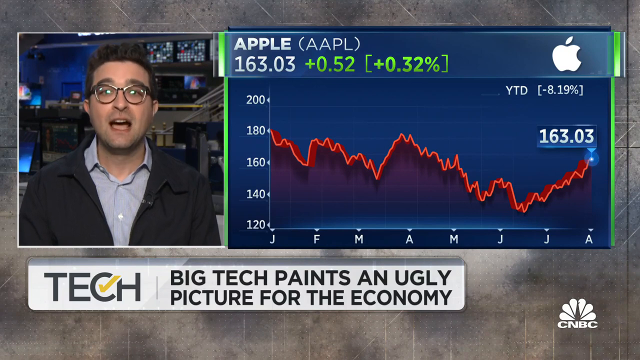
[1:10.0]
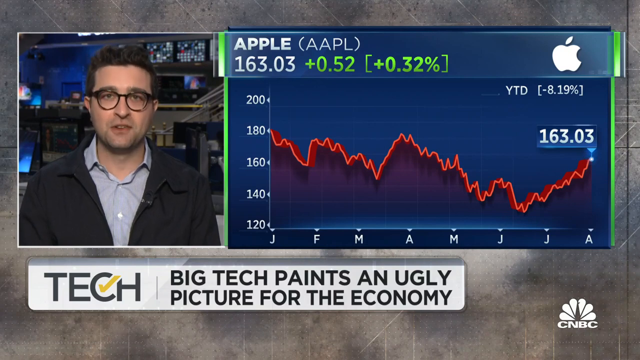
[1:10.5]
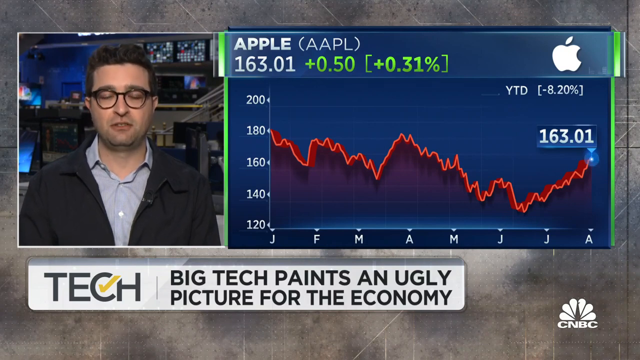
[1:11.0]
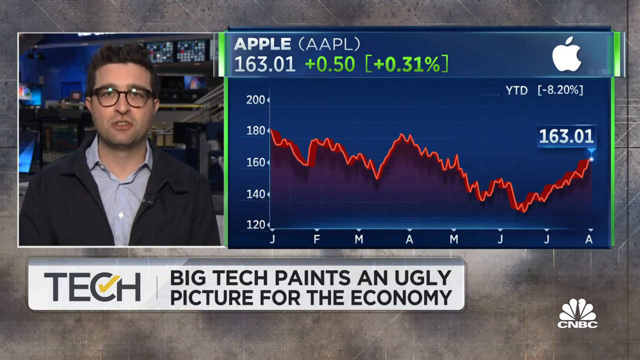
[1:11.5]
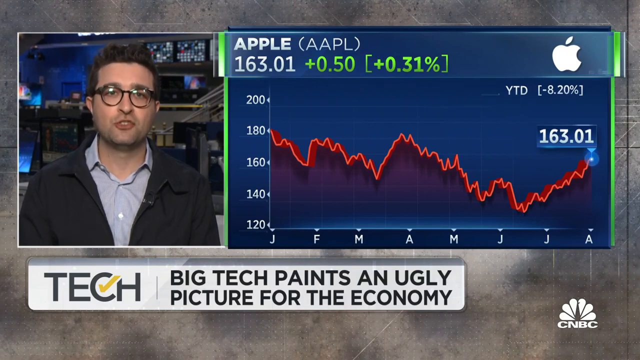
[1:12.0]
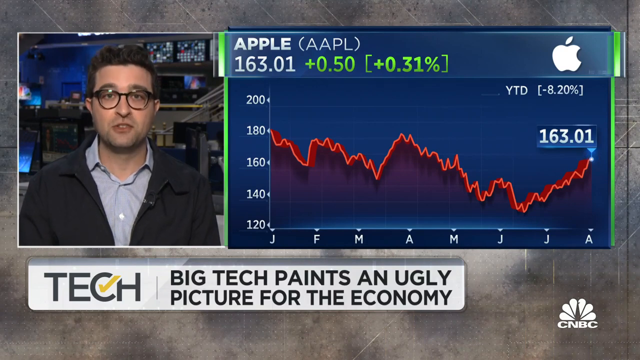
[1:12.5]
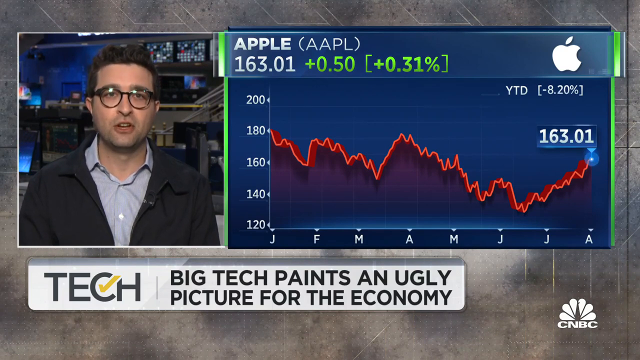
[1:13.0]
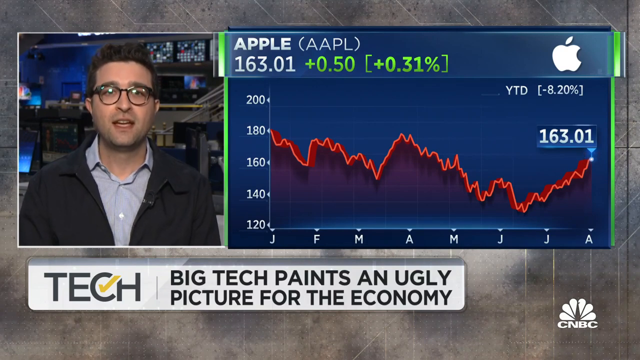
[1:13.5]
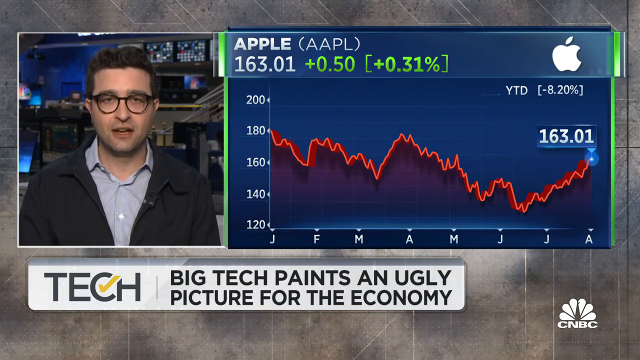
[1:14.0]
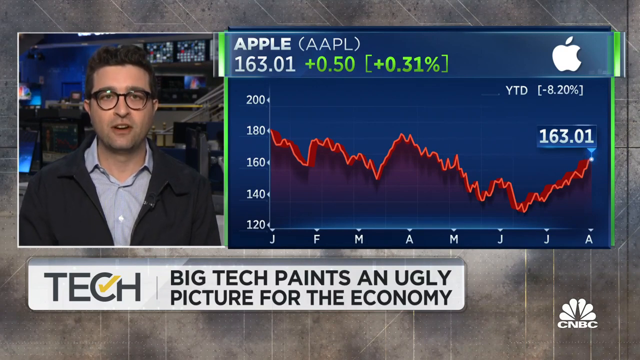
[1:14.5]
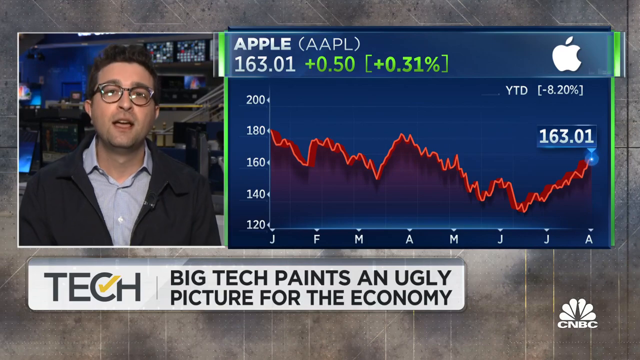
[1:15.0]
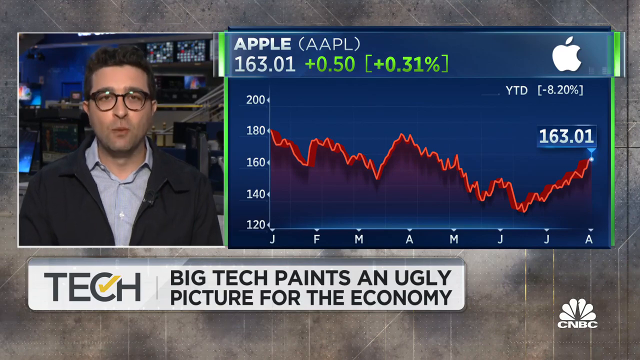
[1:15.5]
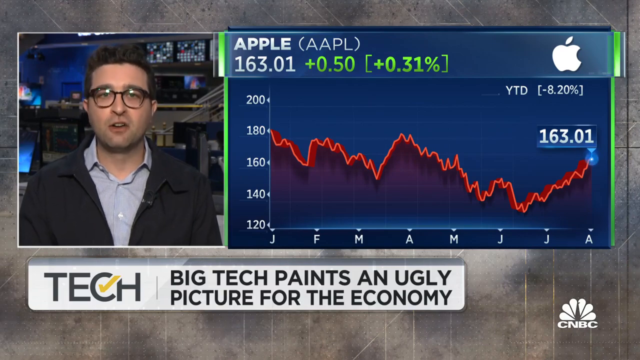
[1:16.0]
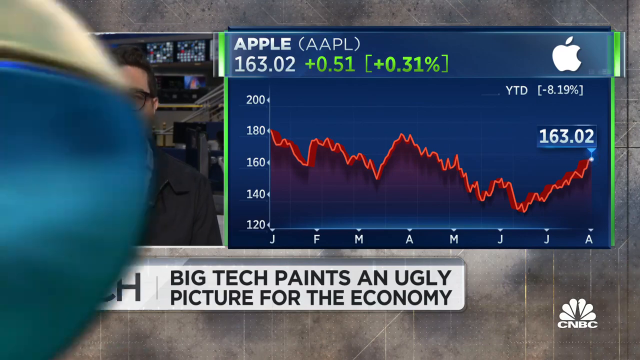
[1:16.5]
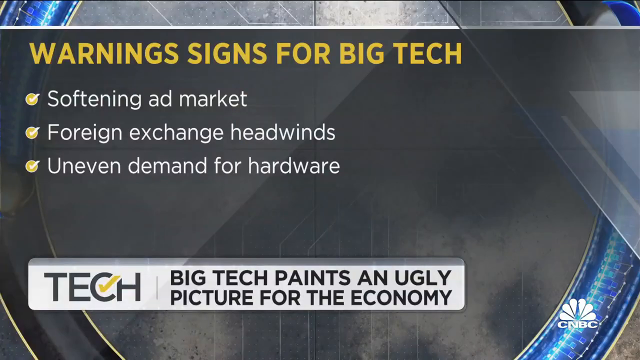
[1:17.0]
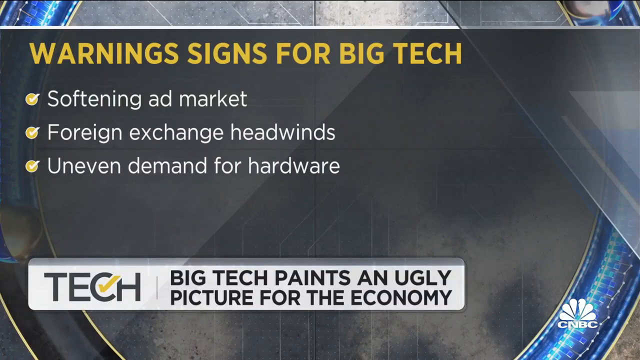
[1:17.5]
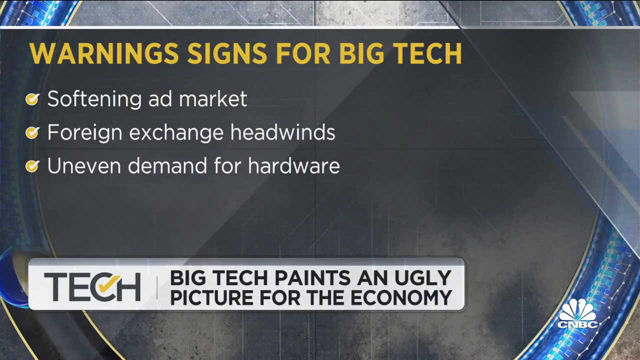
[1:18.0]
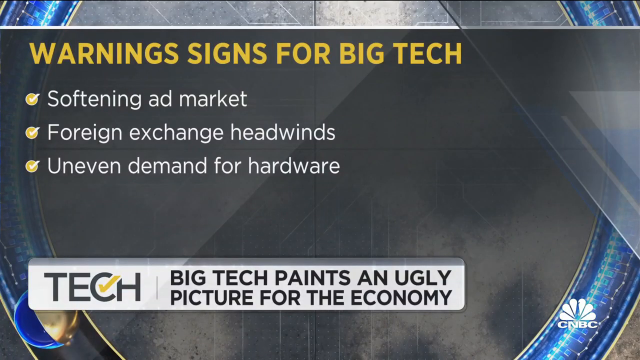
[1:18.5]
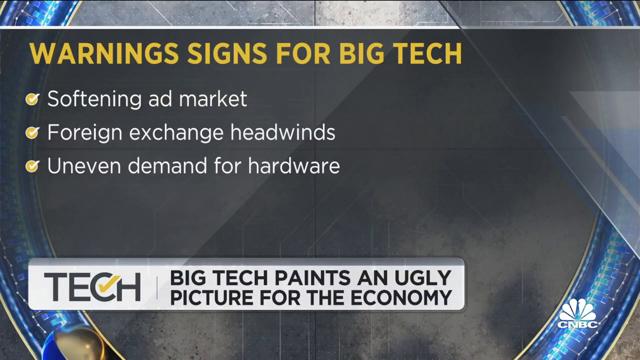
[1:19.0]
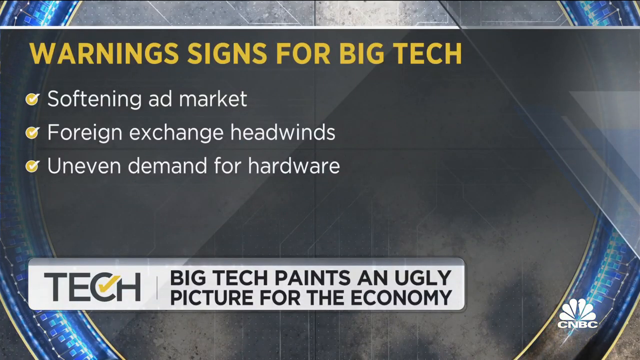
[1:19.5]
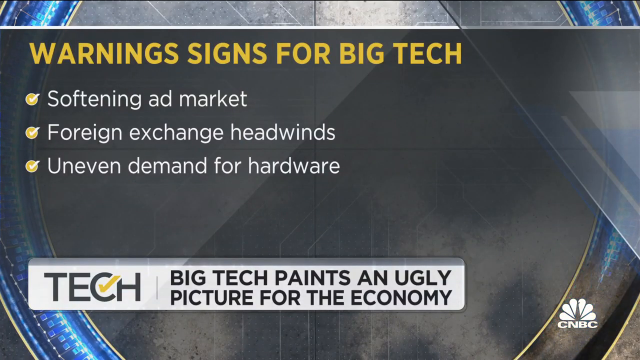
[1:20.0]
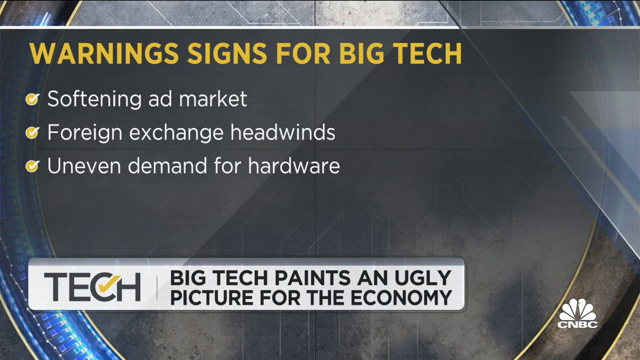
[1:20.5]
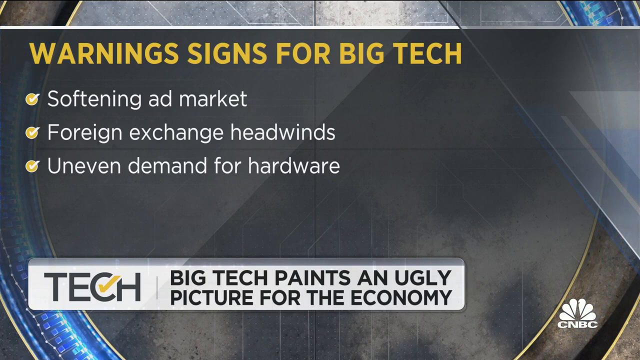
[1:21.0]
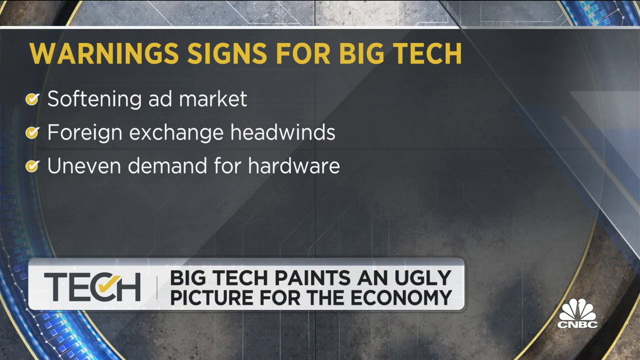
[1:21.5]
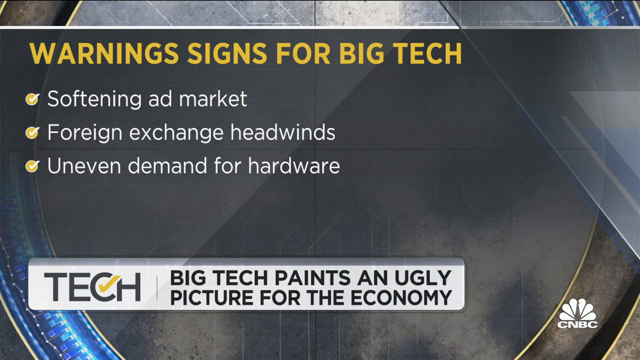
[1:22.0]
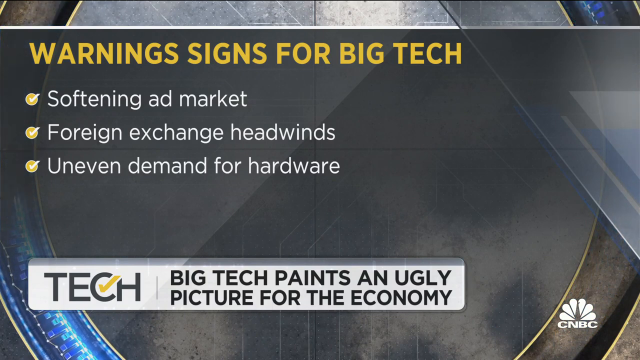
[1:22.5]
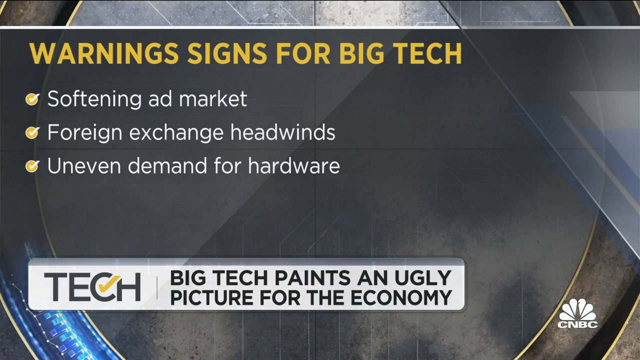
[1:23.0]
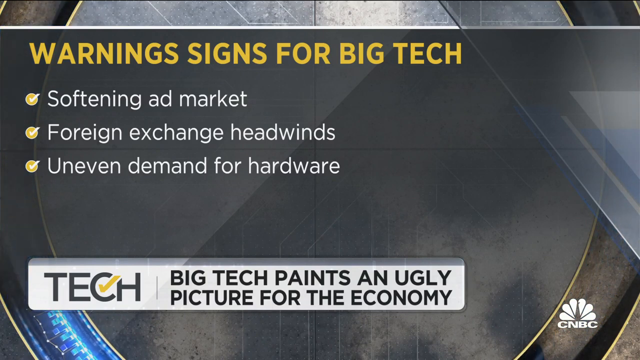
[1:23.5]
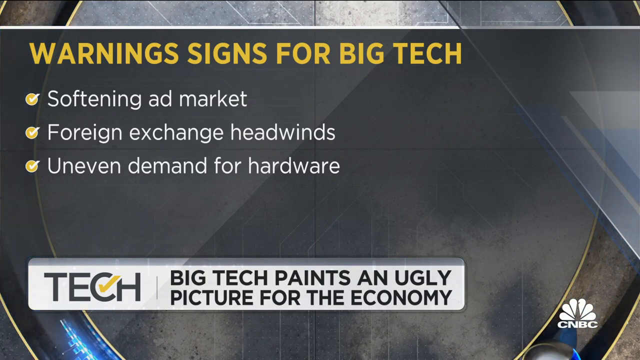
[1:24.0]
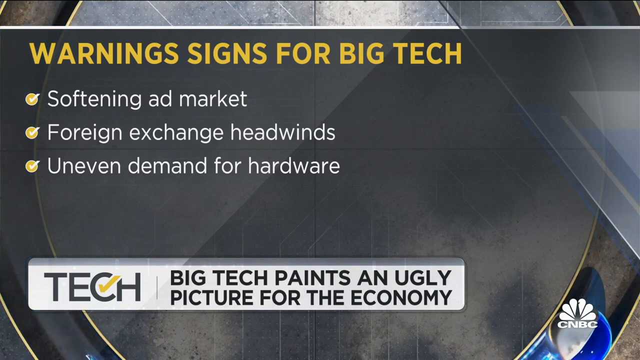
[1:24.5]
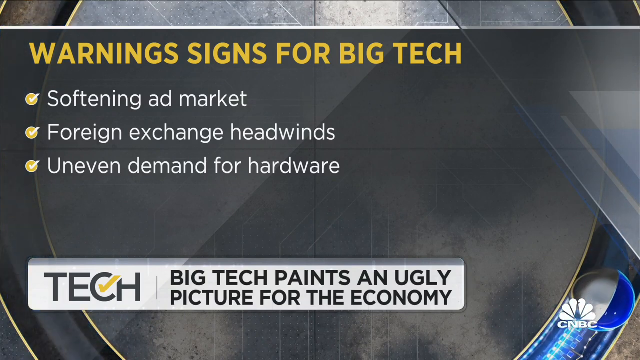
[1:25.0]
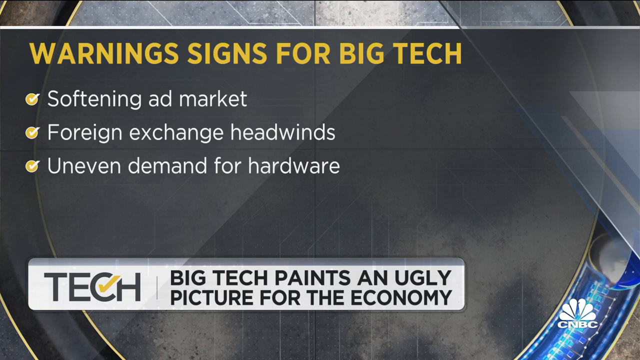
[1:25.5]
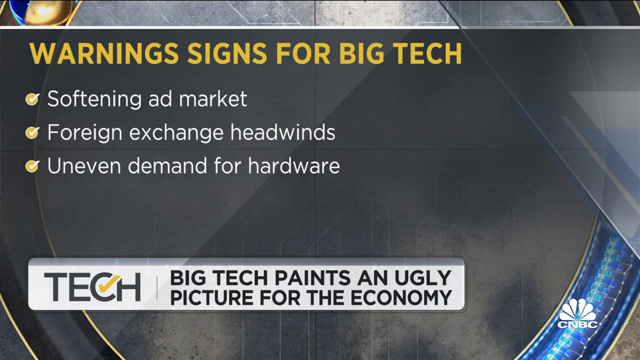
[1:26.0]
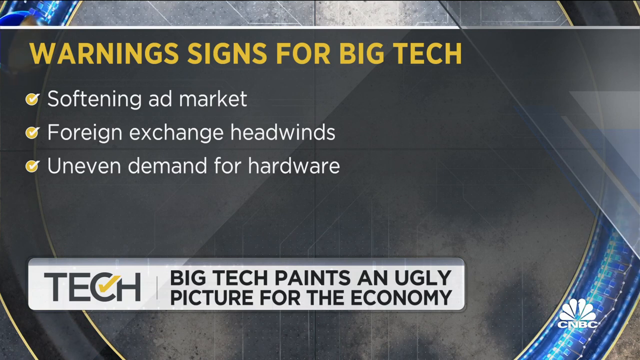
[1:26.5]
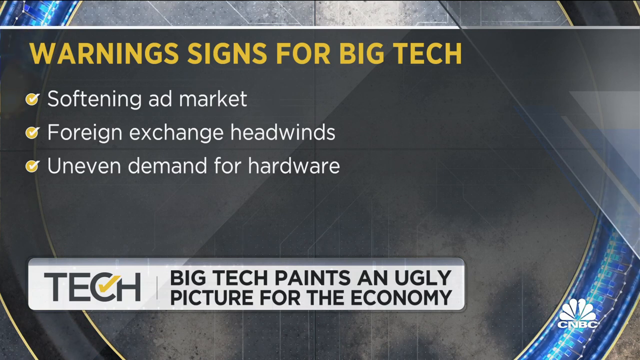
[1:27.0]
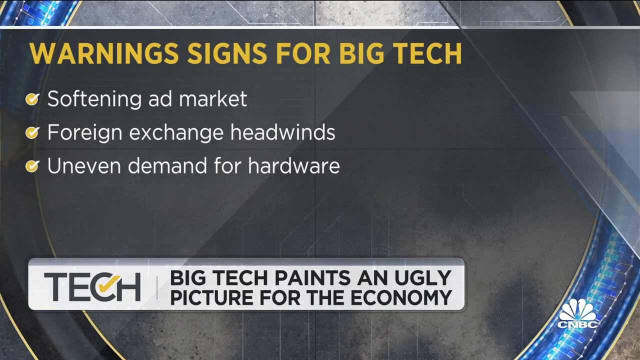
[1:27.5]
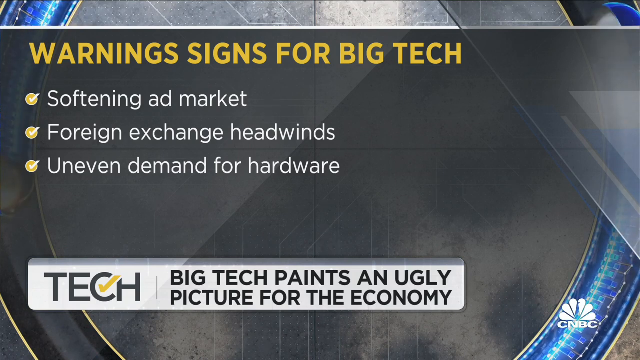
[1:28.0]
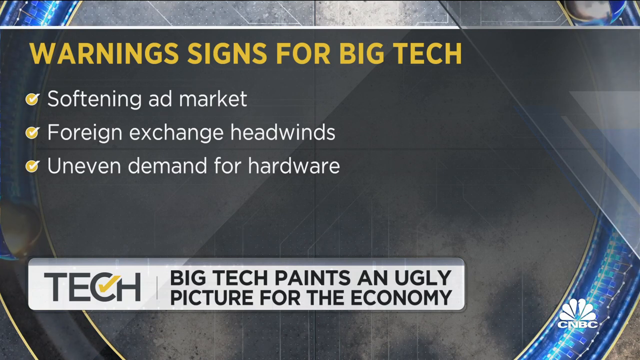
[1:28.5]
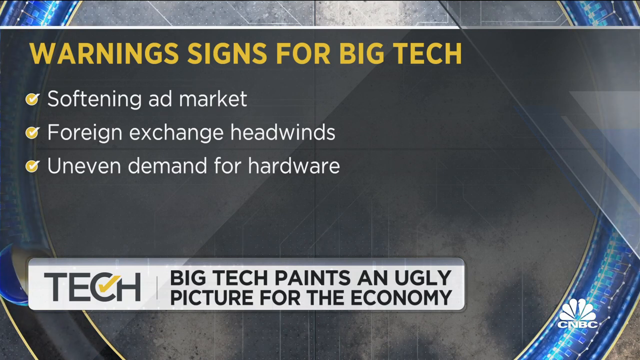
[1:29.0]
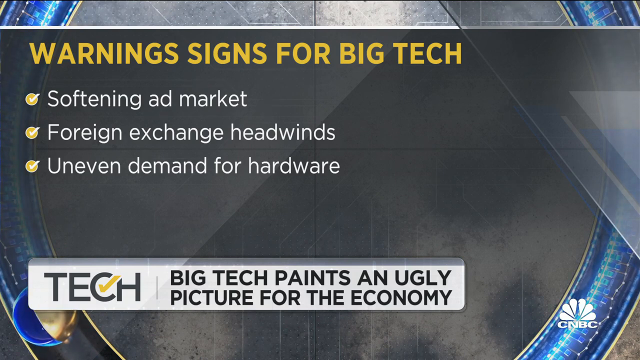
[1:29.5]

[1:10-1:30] The Caucasian male correspondent continues the CNBC segment on big tech painting an ugly picture for the economy, a story from 2022. This part takes a close look at Apple, showing a line graph. Several numbers are displayed, the first being "163.01 +0.50 (+0.31%)". A red line on the graph begins at 180 and ends at 163.01. The video then cuts to a slide that says "warning signs for big tech." The first warning sign is a softening ad market, the second is foreign exchange headwinds, and the third is uneven demand for hardware.